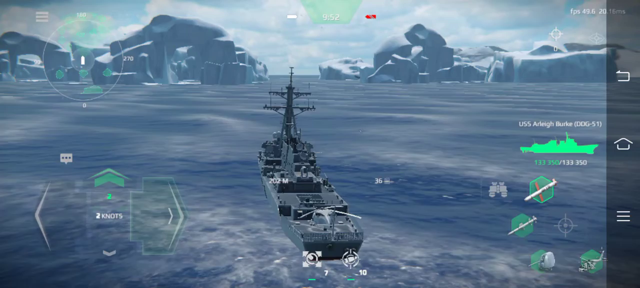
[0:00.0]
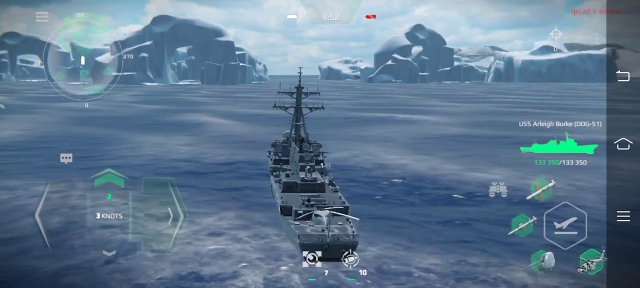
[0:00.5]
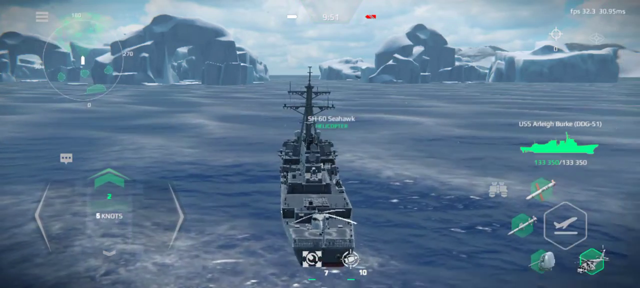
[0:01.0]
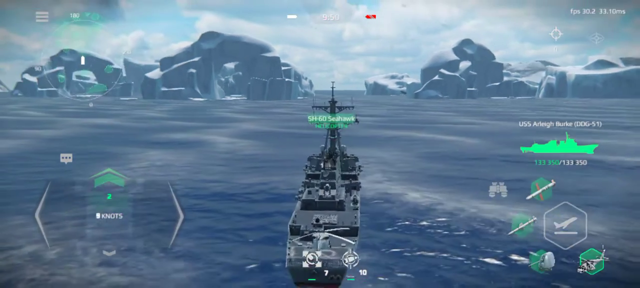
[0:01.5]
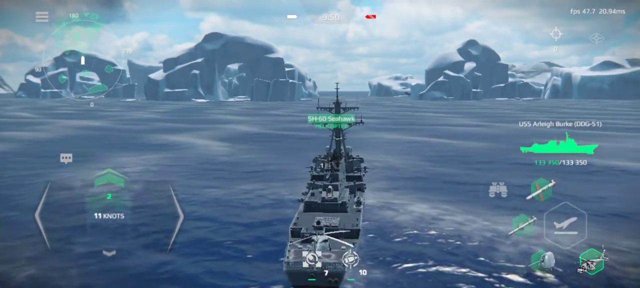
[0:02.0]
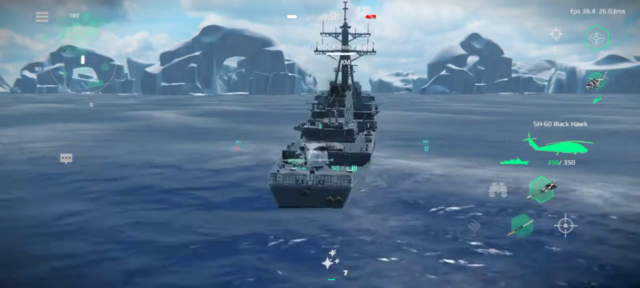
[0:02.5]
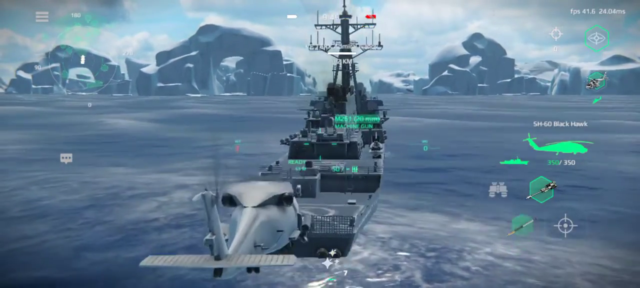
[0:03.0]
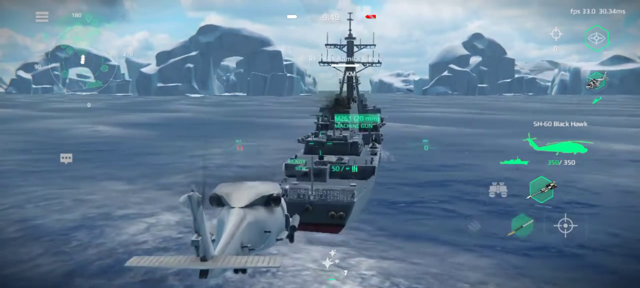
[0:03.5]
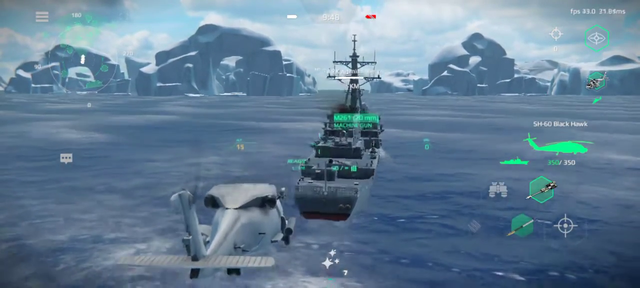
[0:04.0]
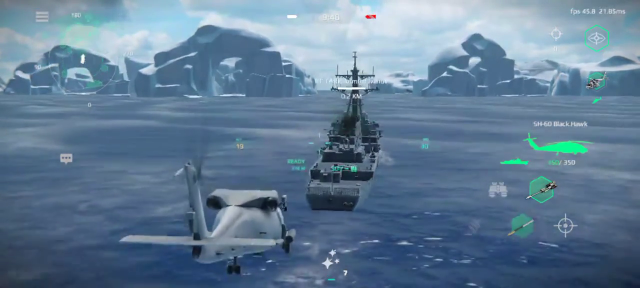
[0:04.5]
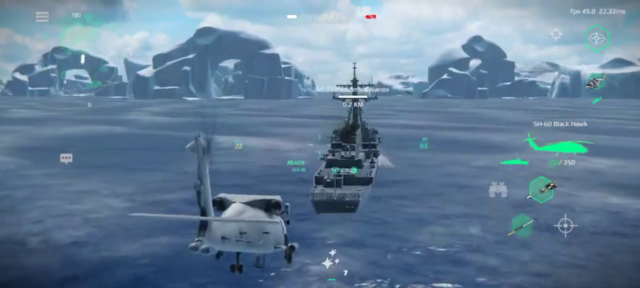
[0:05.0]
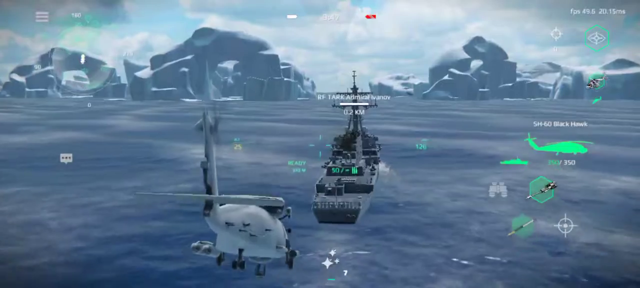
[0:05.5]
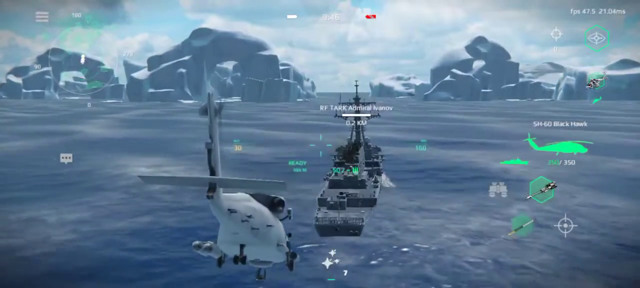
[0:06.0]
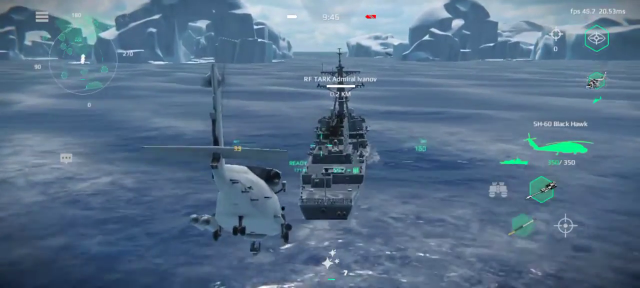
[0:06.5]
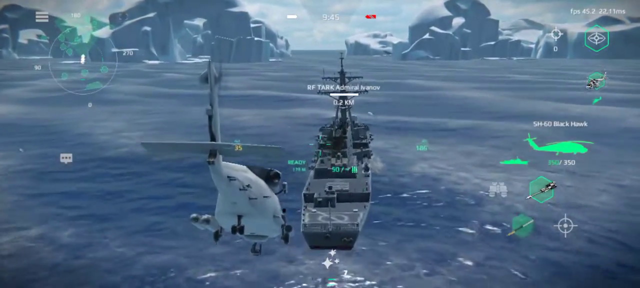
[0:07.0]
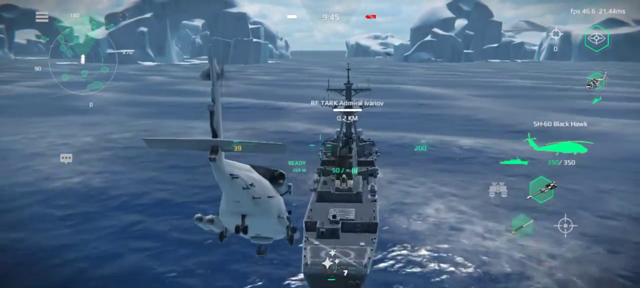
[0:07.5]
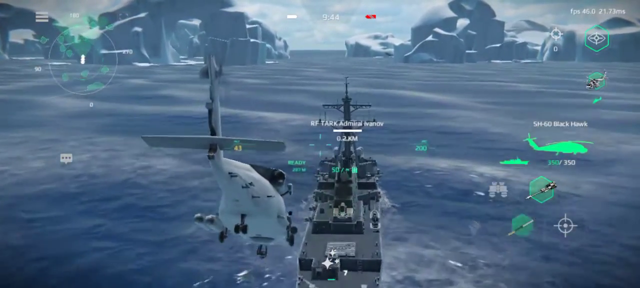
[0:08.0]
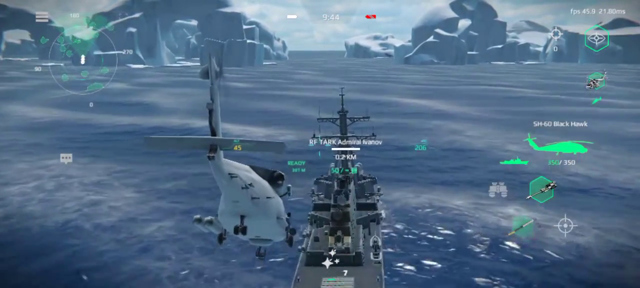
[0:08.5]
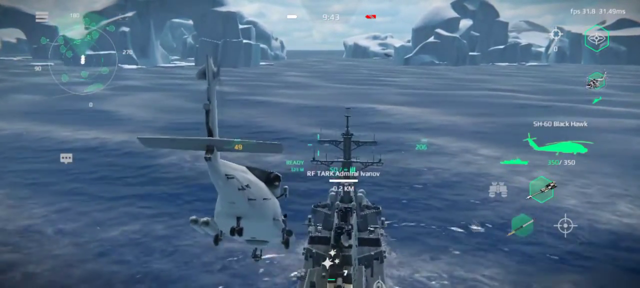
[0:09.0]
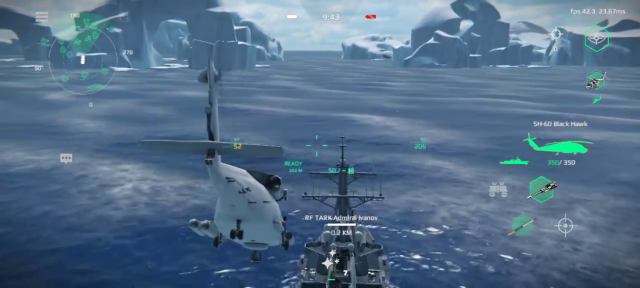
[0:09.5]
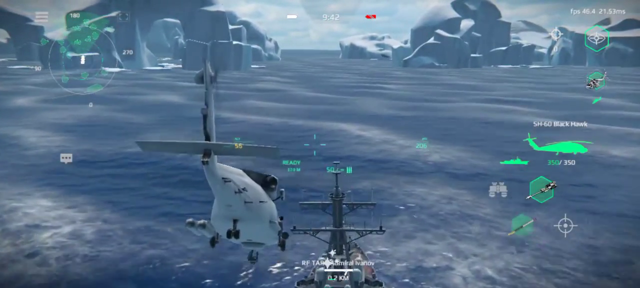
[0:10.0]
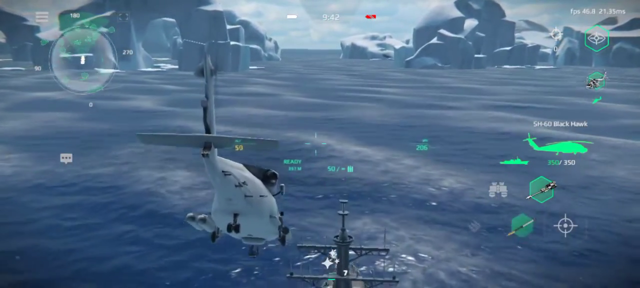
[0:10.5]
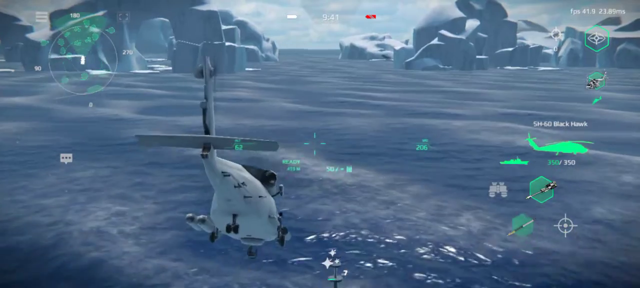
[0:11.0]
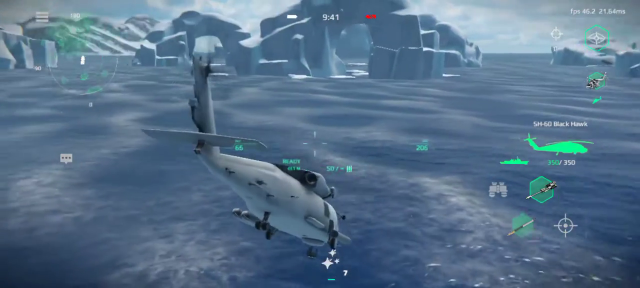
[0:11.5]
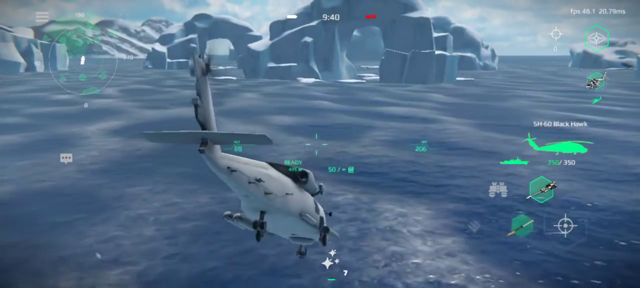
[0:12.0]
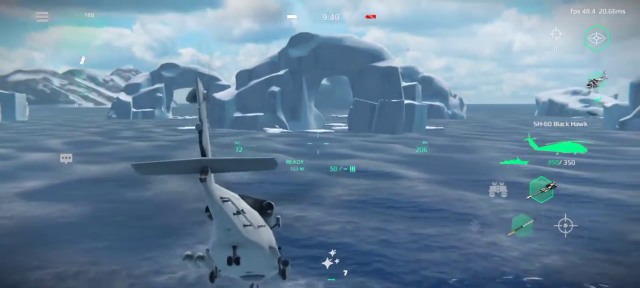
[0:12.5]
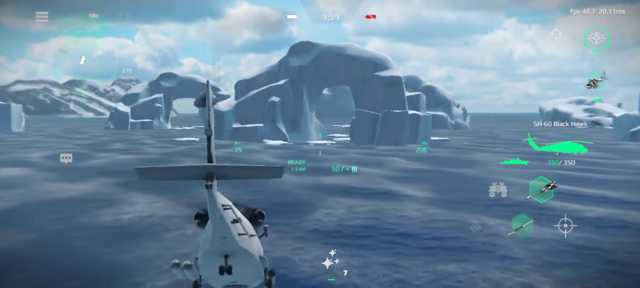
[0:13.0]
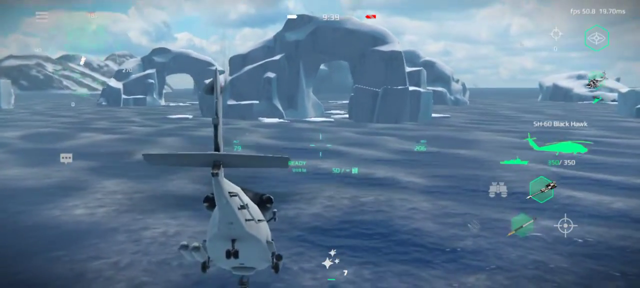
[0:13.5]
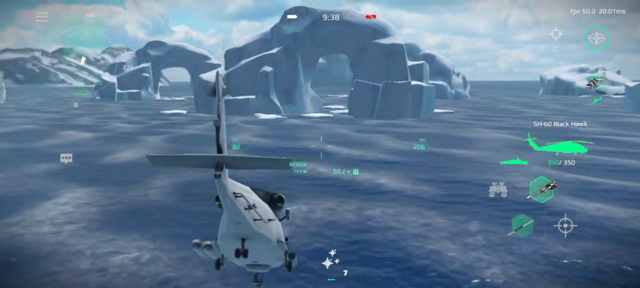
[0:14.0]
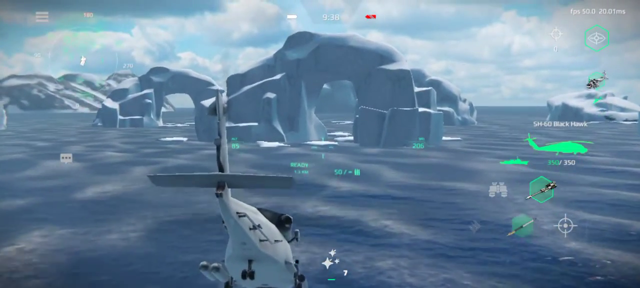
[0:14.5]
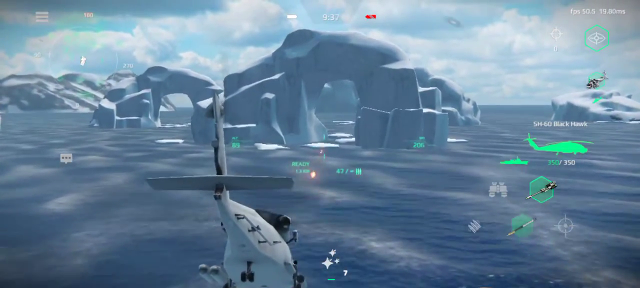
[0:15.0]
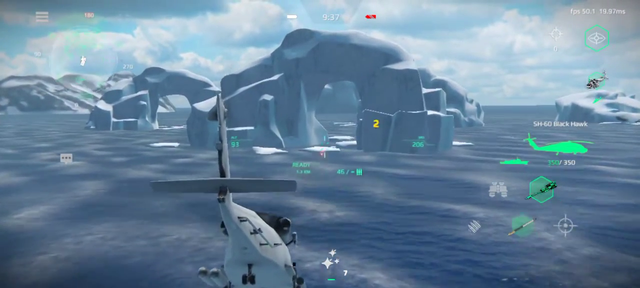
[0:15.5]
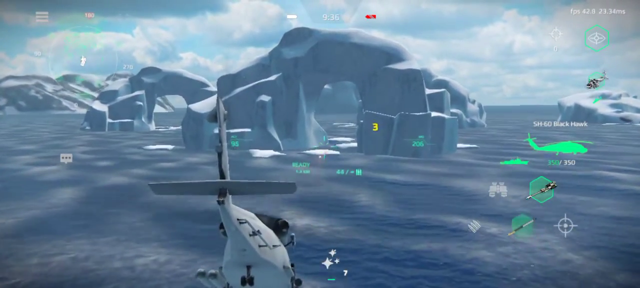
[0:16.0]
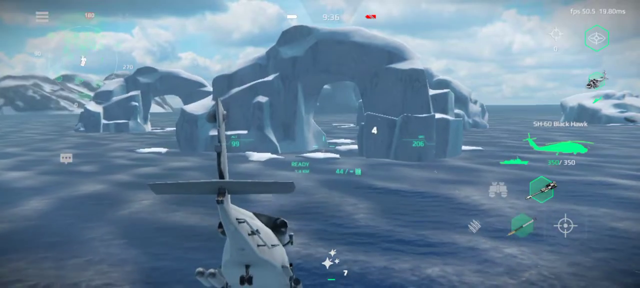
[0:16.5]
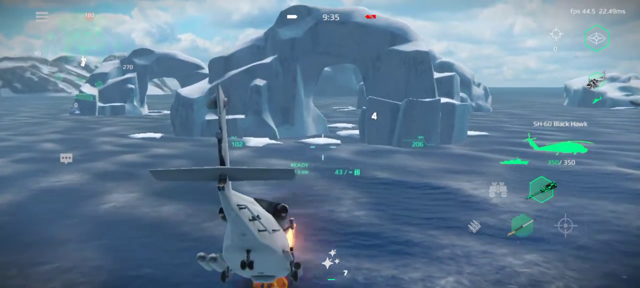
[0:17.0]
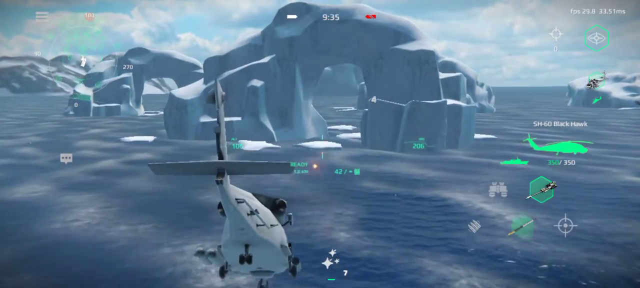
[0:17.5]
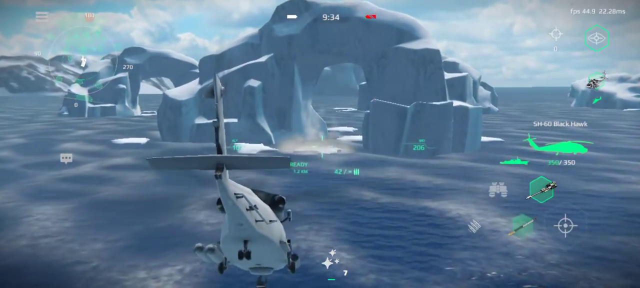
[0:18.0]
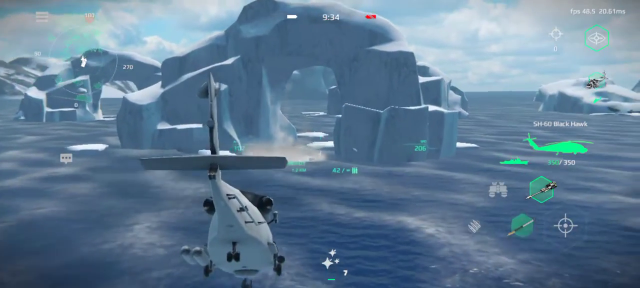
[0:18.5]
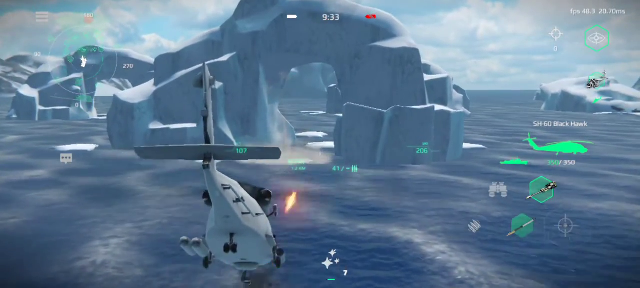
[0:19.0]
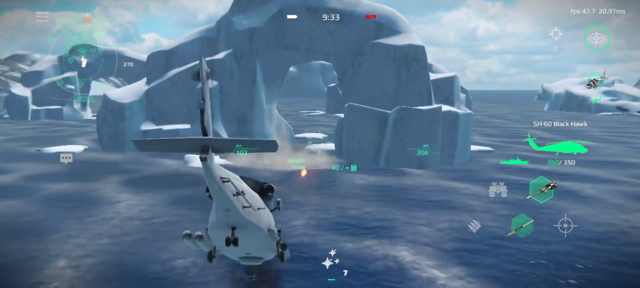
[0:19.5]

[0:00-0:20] Gameplay from a video game opens on what looks like a military ship in an ocean that appears arctic, with big glaciers off in the distance. An overlay appears on the right-hand side, apparently showing a Black Hawk, a set of binoculars, and what looks like an image of a ship. The Black Hawk in the overlay is labeled, green, and facing right. The ship is in the center of the image, and a Black Hawk helicopter is behind the ship, closer to the camera. The main colors are bluish and gray, giving a gloomy look. The helicopter sort of hovers over and passes the ship, and the view mostly follows the Black Hawk helicopter as it shoots toward one of the glaciers.